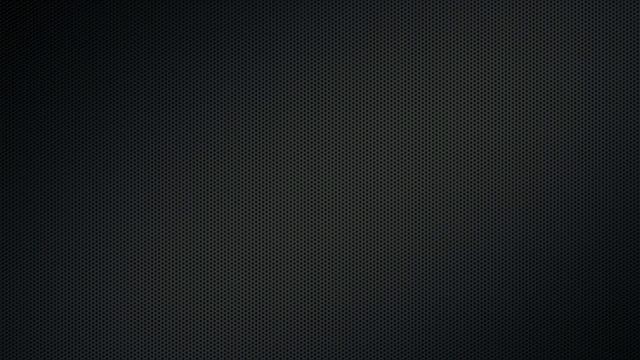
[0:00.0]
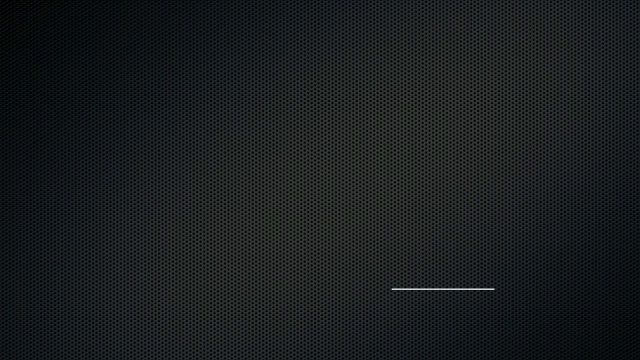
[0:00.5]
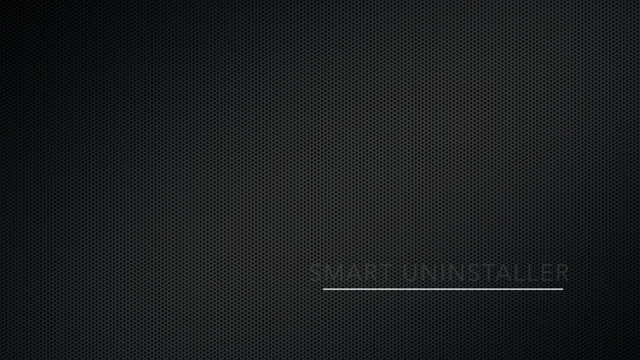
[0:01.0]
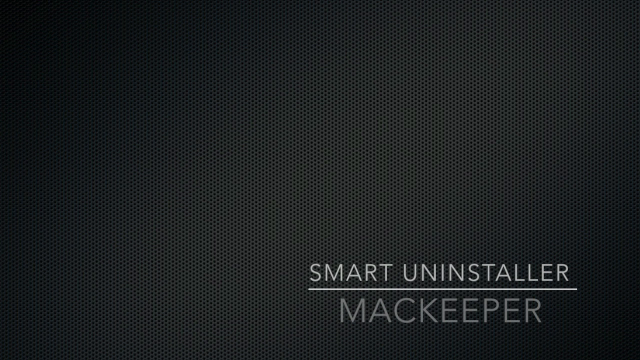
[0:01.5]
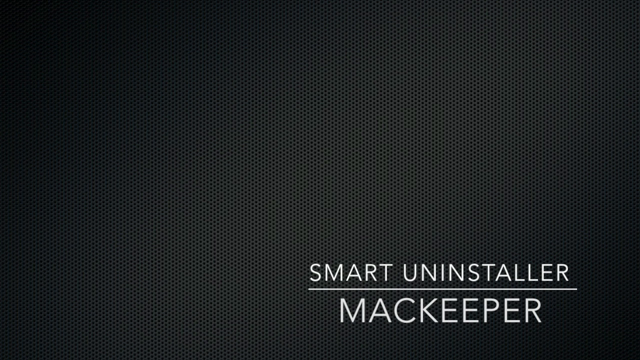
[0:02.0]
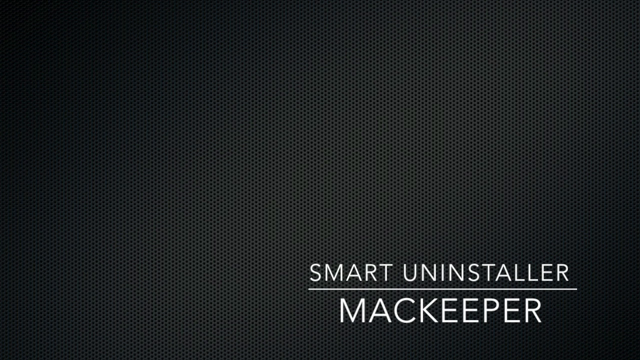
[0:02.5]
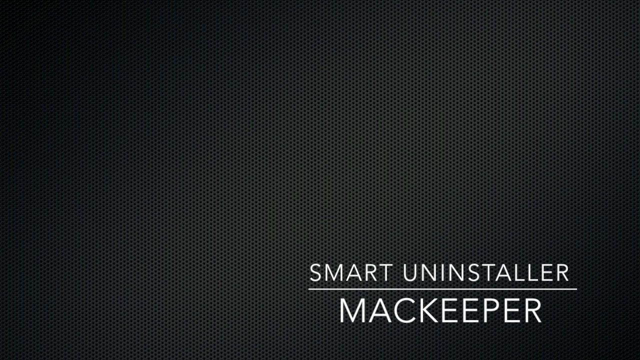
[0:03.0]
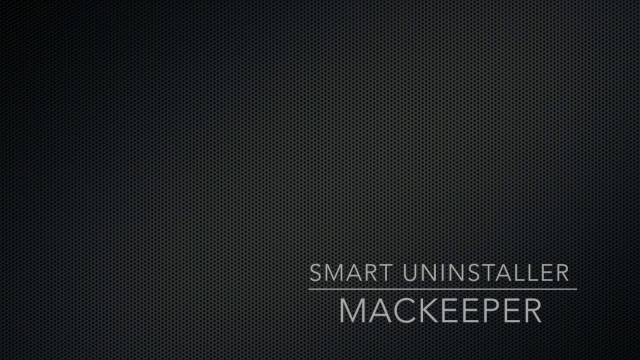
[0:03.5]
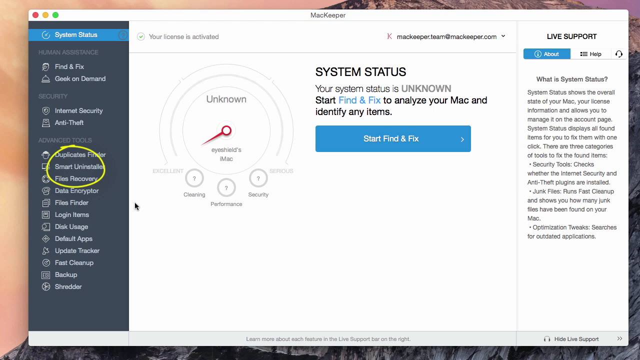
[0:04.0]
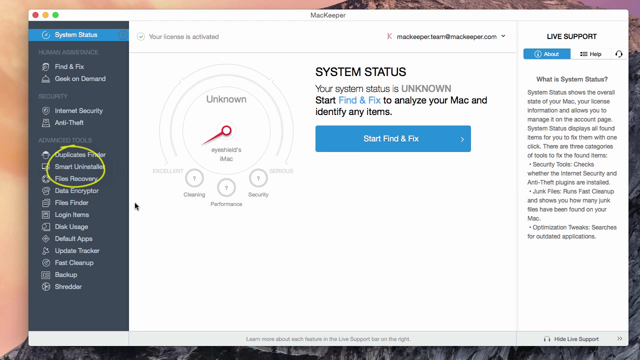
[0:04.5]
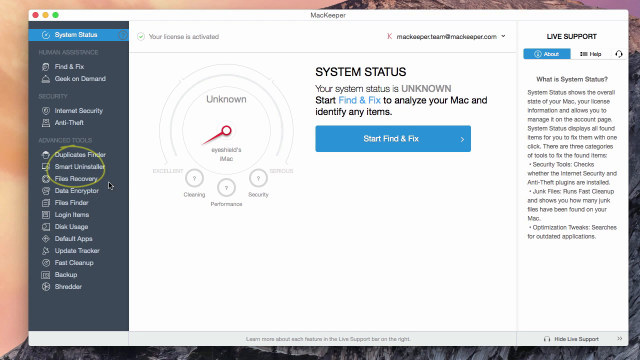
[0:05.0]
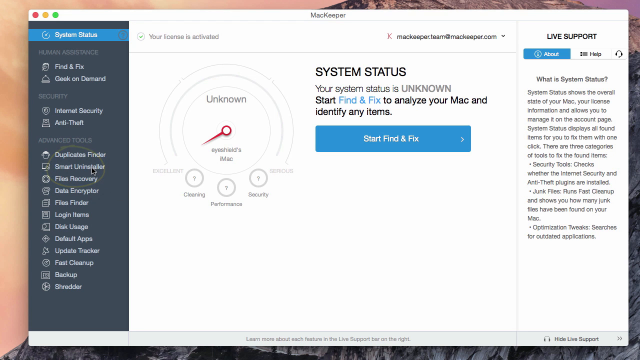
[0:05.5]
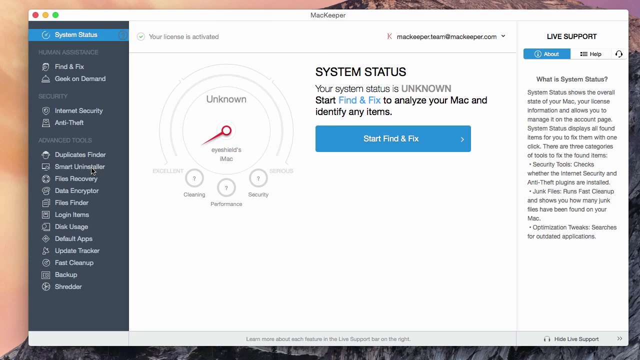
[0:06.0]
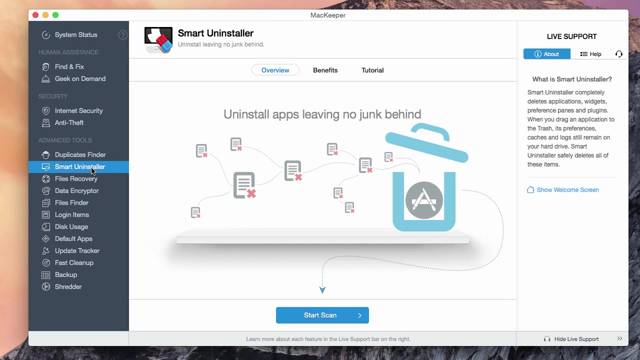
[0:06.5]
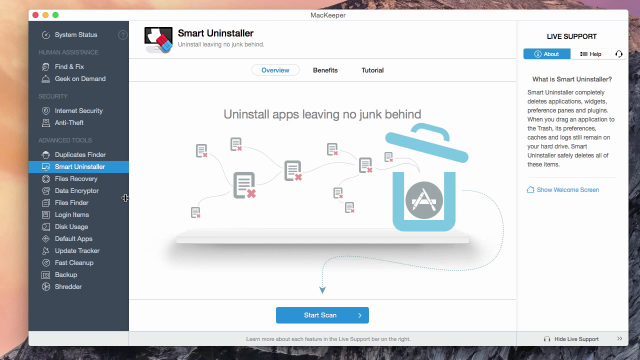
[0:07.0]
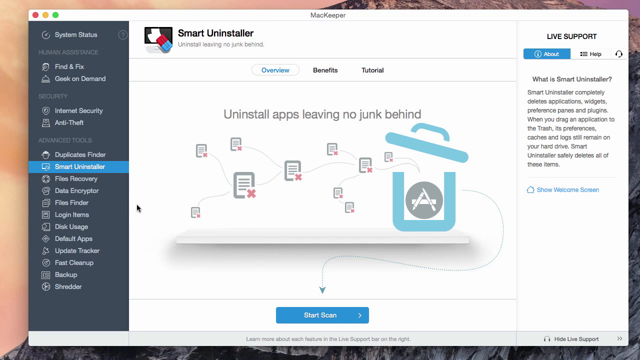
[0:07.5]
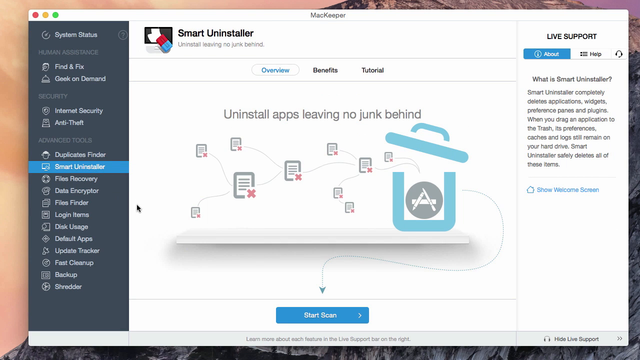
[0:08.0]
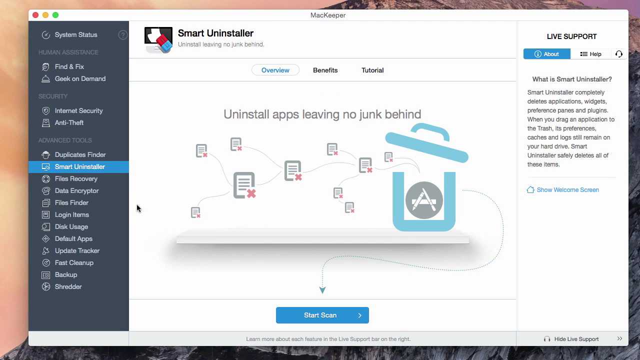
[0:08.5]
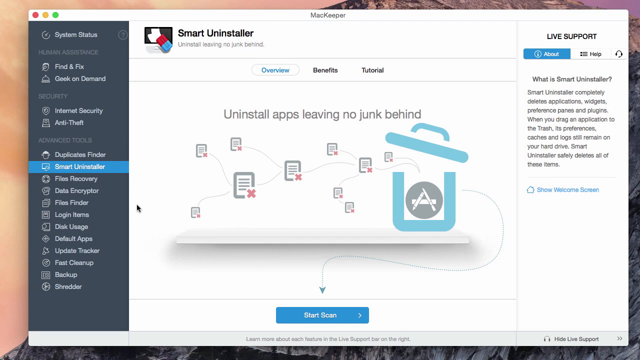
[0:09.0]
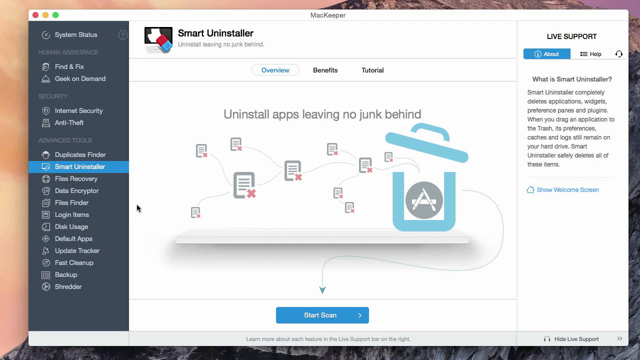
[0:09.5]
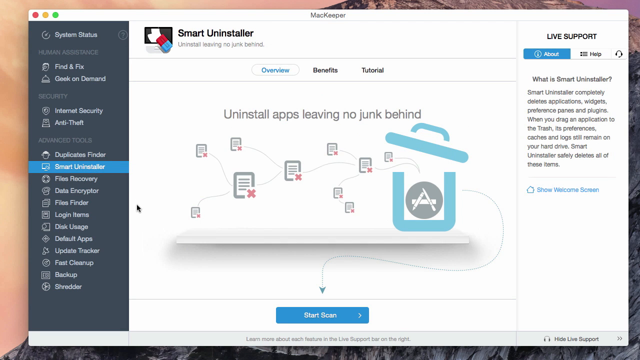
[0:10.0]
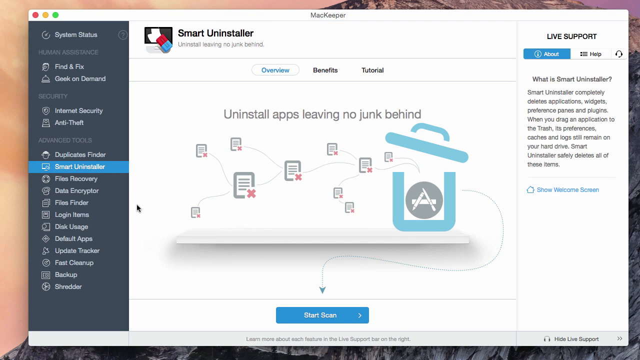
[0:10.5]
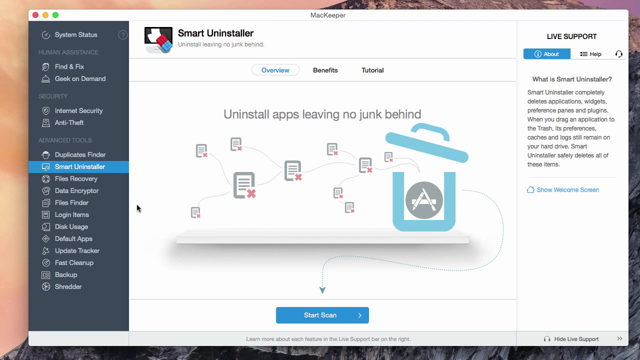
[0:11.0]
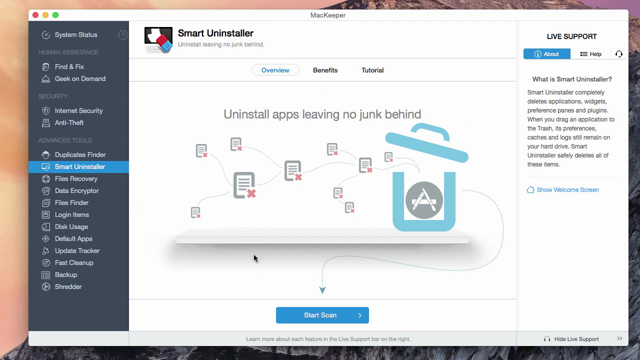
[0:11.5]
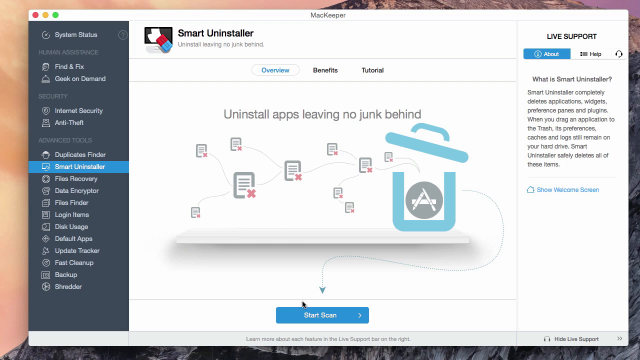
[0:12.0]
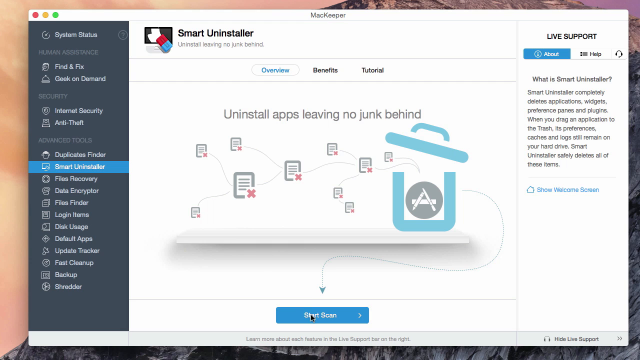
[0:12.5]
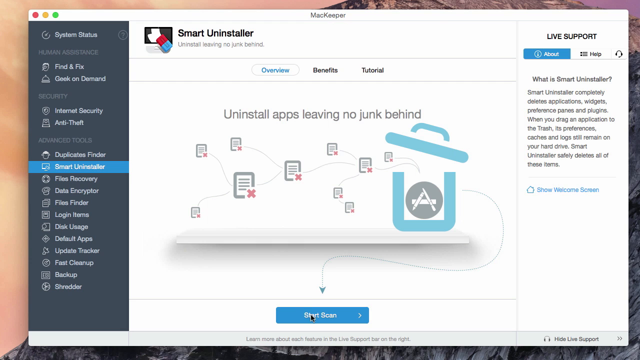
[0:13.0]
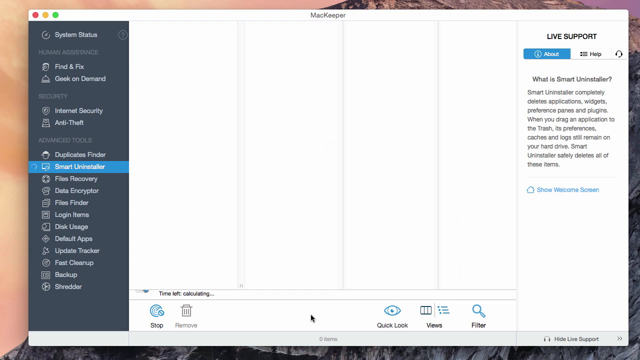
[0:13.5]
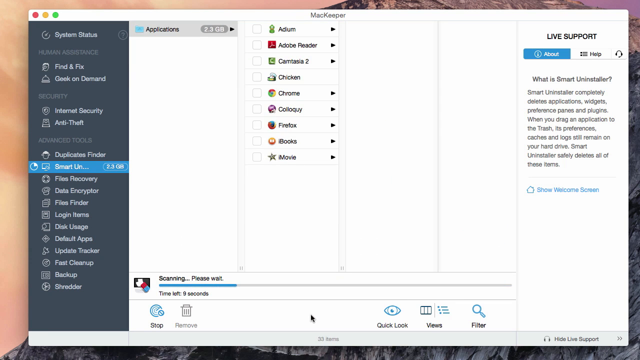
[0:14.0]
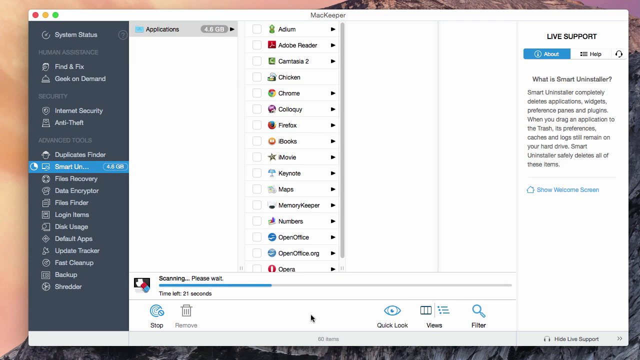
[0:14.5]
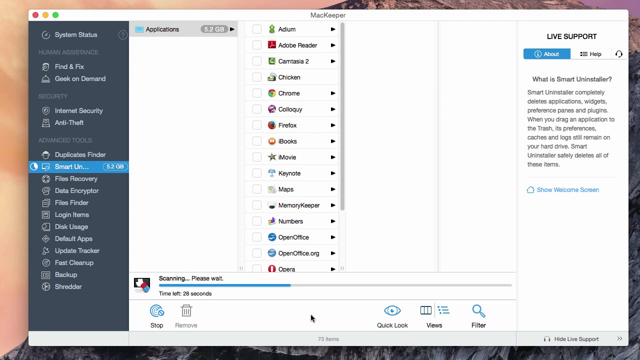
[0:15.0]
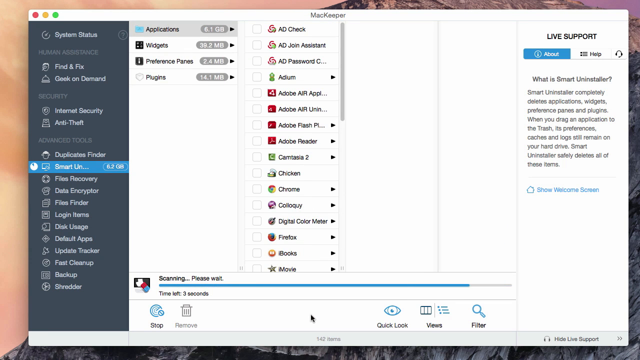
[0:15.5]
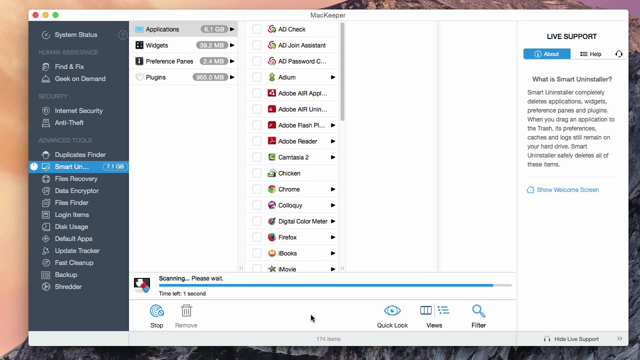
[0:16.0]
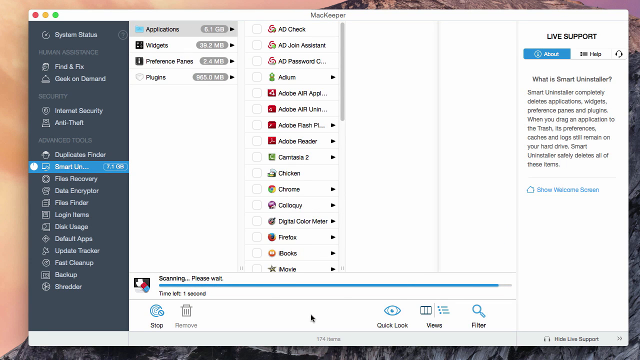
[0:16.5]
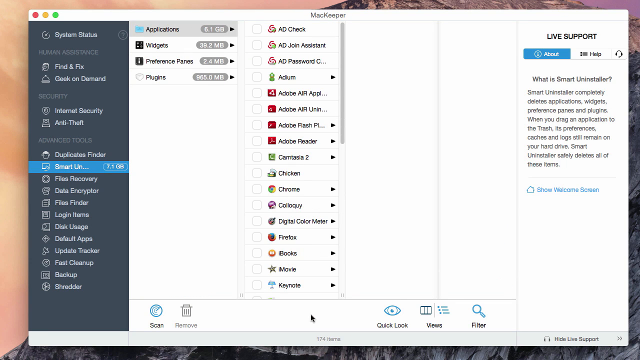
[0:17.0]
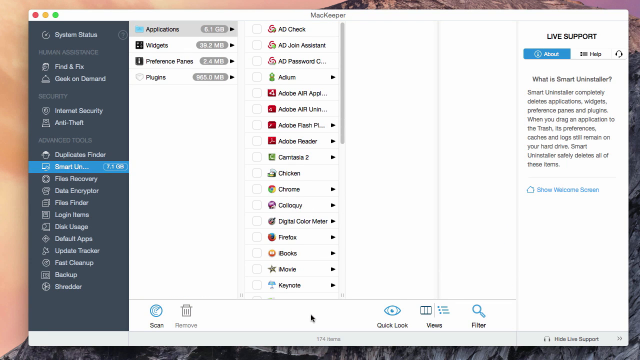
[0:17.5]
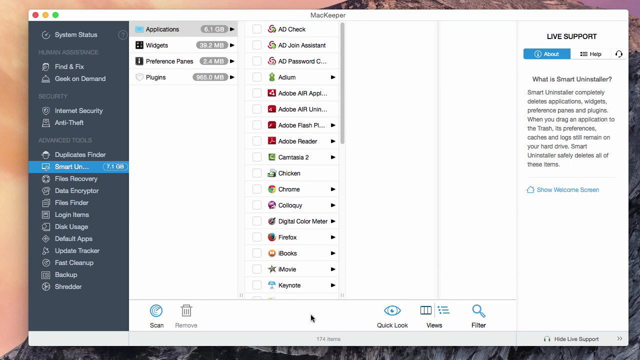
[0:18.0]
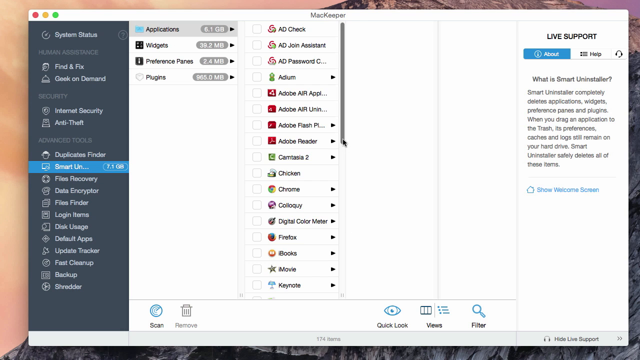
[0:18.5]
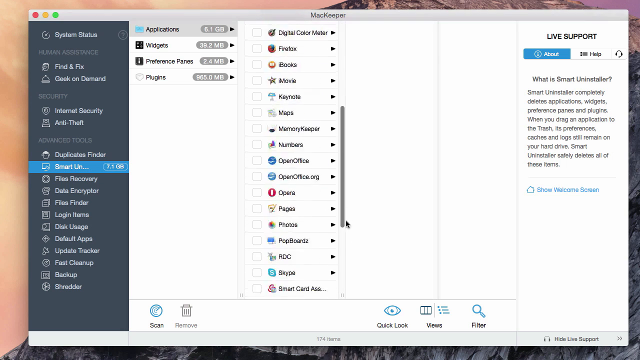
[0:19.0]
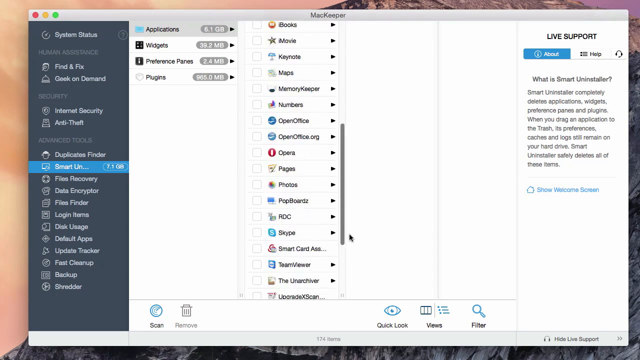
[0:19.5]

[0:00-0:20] The video opens on a carbon fiber background, and text appears in the bottom right reading "smart uninstaller MacKeeper," with a line between the words "smart uninstaller" and "MacKeeper." This fades into a screen showing the MacKeeper software on the computer. A yellow circle surrounds Smart Uninstaller, an advanced tool on the left. The user moves the mouse up to Smart Uninstaller and clicks it, opening the Smart Uninstaller section of the software. The mouse stays still for a moment, then moves down to the Start Scan button at the bottom of the section. The scan begins, with a message to please wait while everything on the system is scanned. The mouse stays in place below until the scan finishes, then pulls down the scroll bar beside the list of applications to look through them all, and scrolls back up to the top.